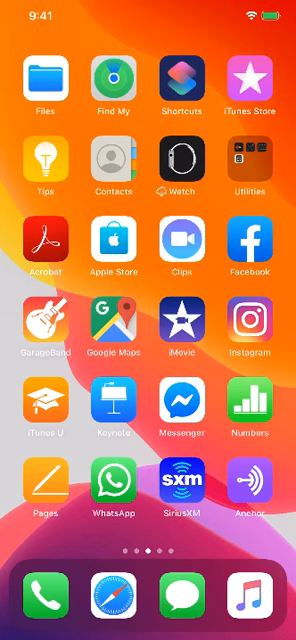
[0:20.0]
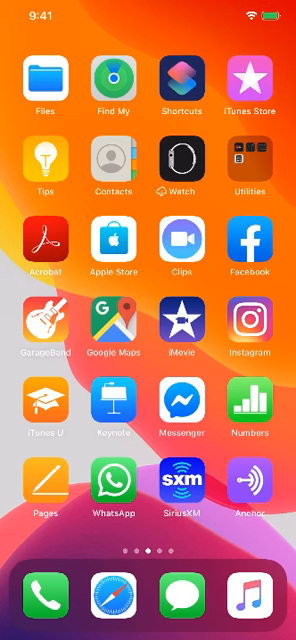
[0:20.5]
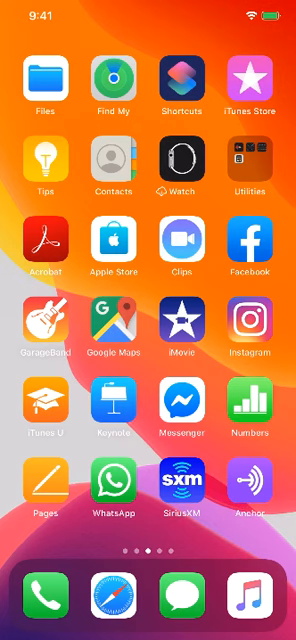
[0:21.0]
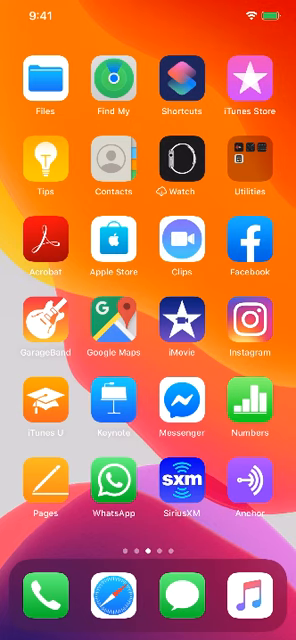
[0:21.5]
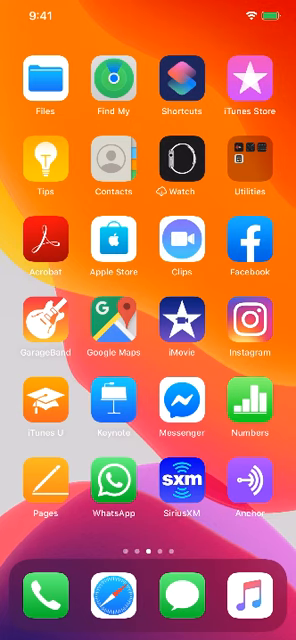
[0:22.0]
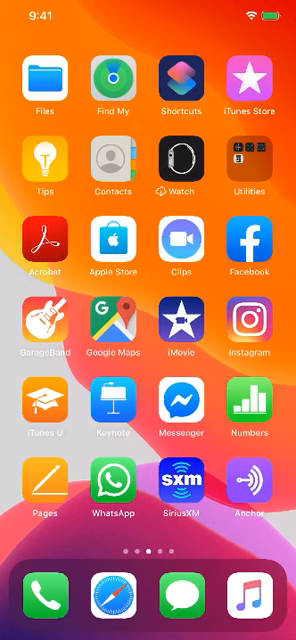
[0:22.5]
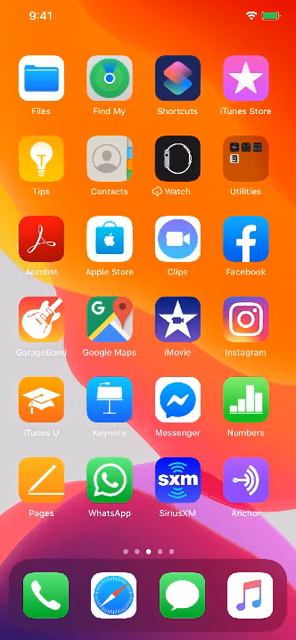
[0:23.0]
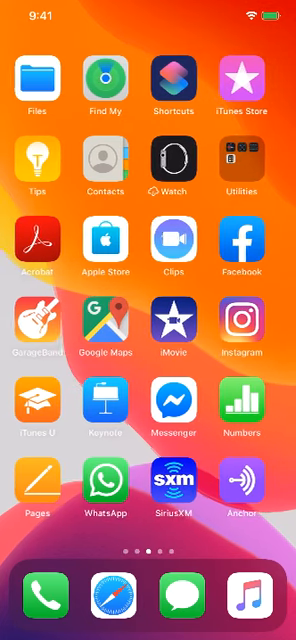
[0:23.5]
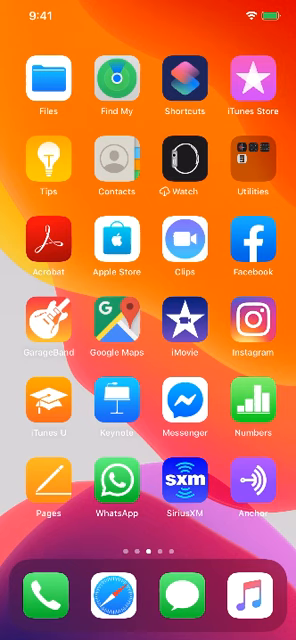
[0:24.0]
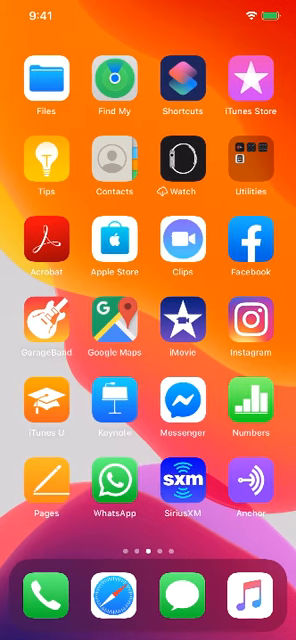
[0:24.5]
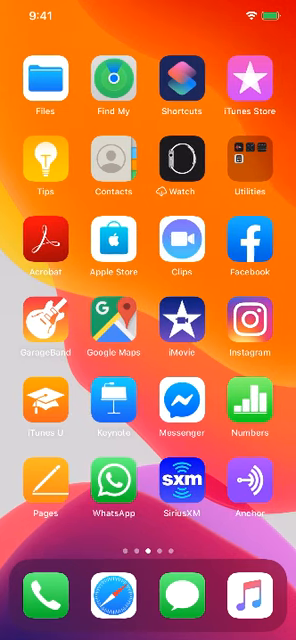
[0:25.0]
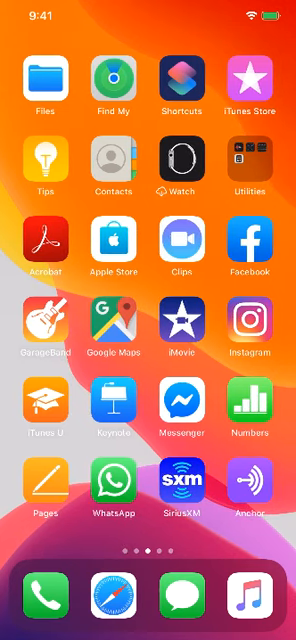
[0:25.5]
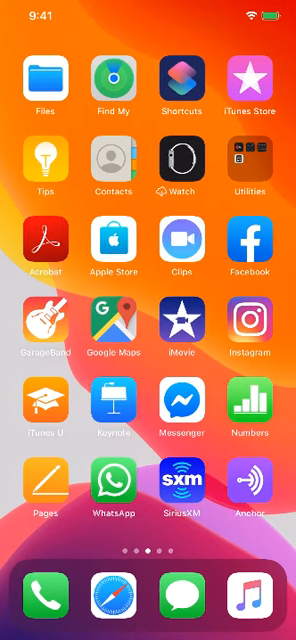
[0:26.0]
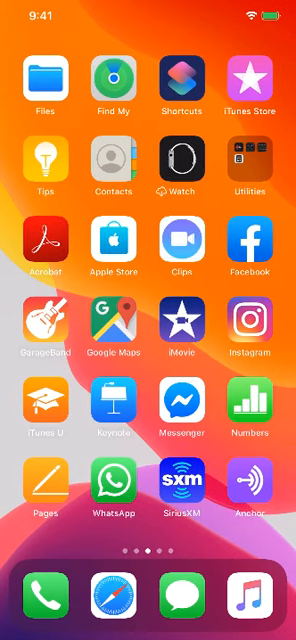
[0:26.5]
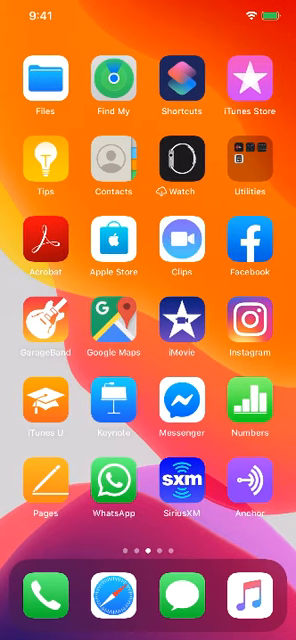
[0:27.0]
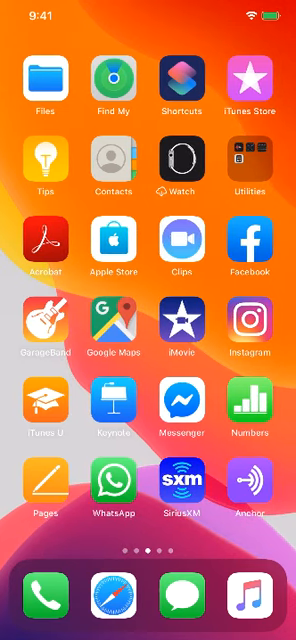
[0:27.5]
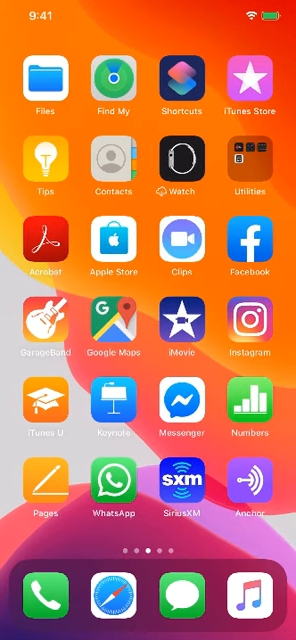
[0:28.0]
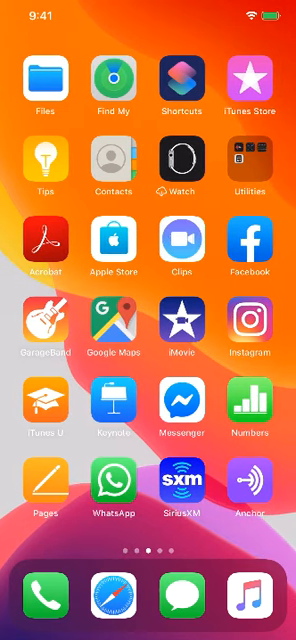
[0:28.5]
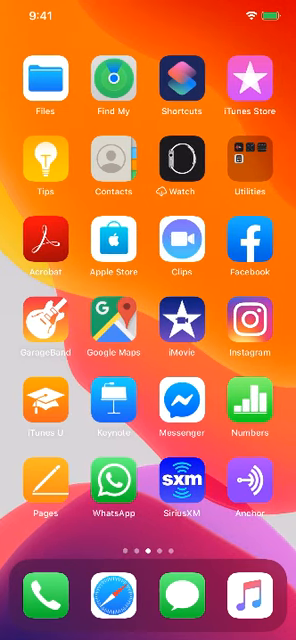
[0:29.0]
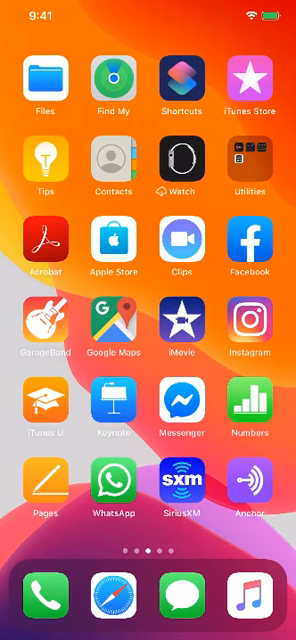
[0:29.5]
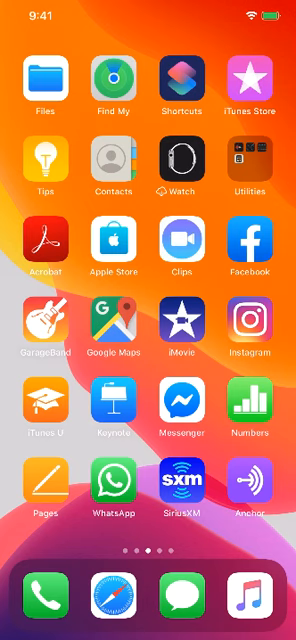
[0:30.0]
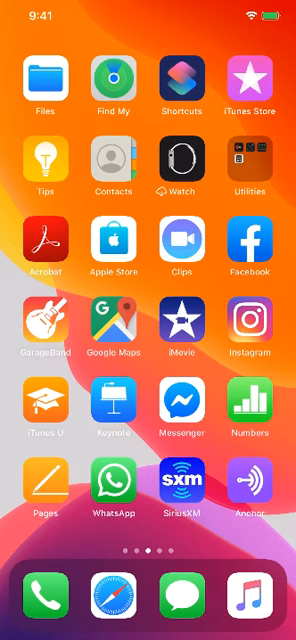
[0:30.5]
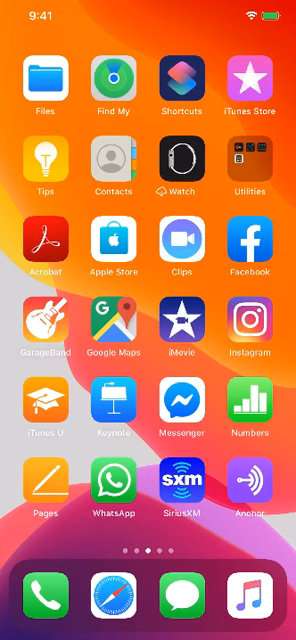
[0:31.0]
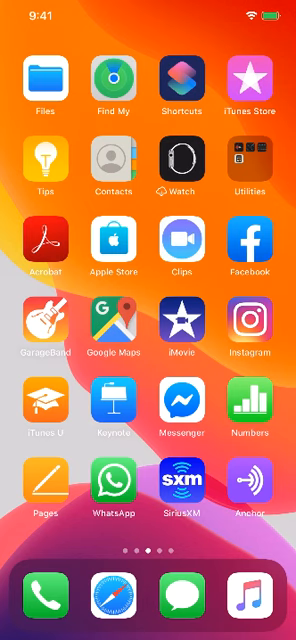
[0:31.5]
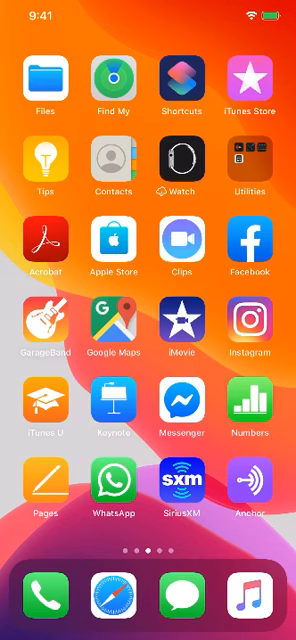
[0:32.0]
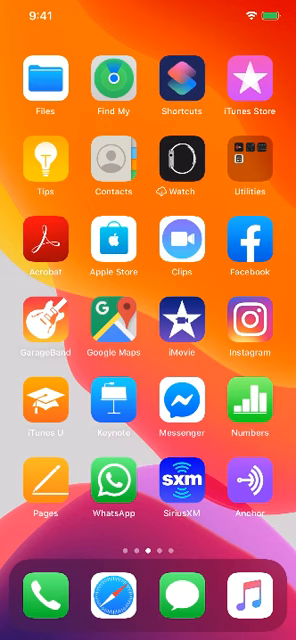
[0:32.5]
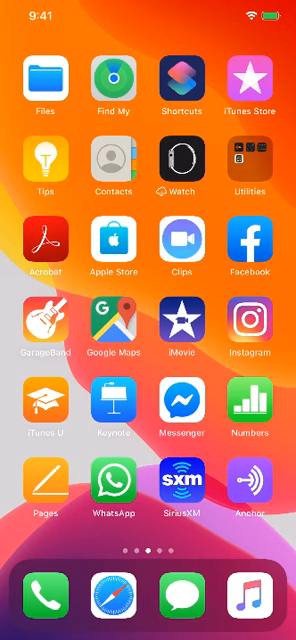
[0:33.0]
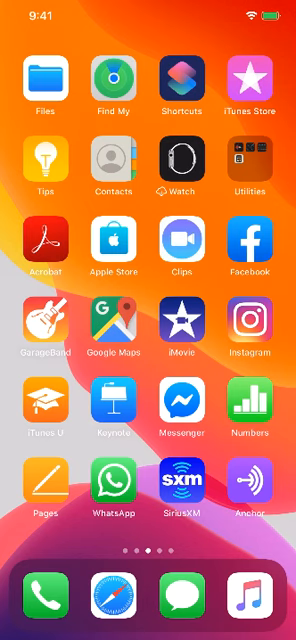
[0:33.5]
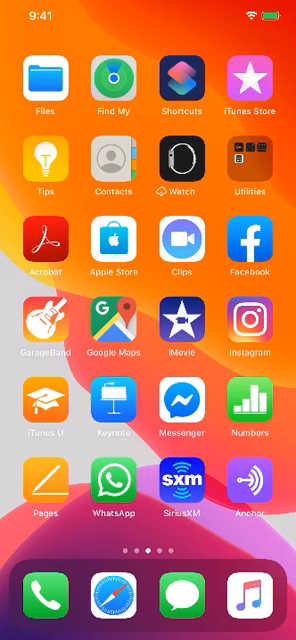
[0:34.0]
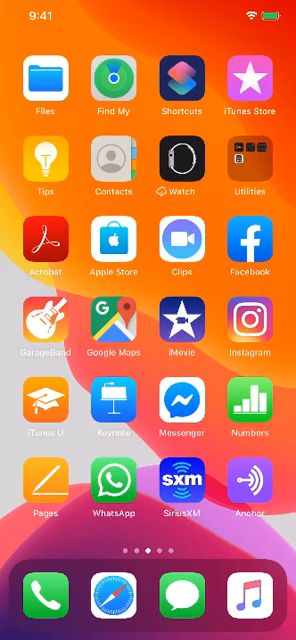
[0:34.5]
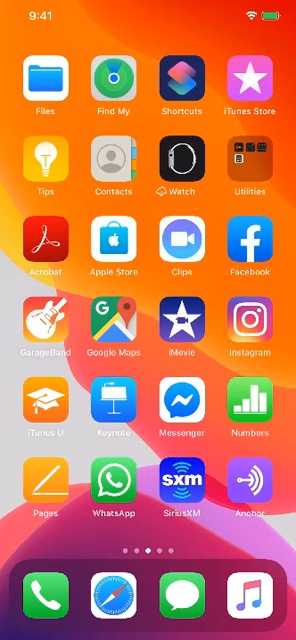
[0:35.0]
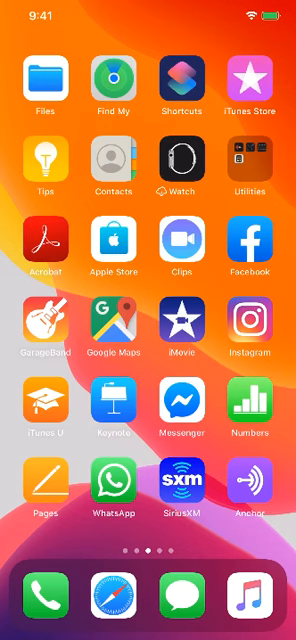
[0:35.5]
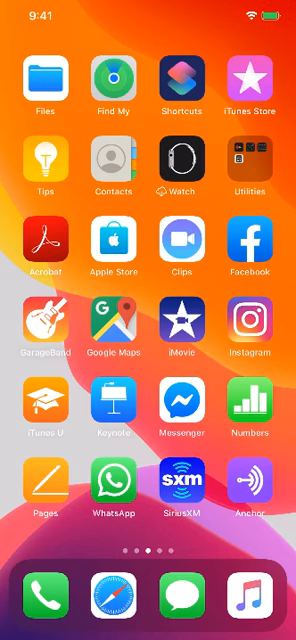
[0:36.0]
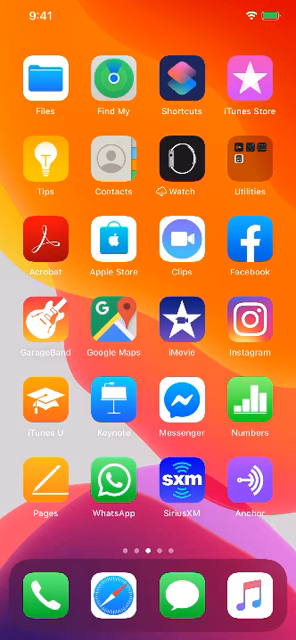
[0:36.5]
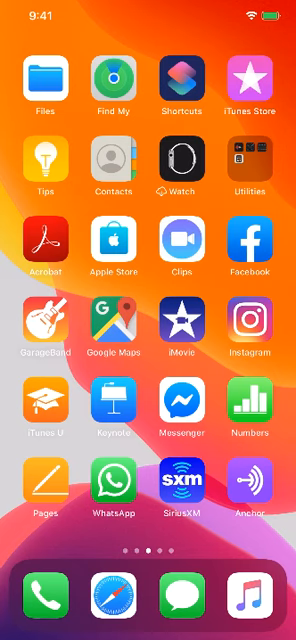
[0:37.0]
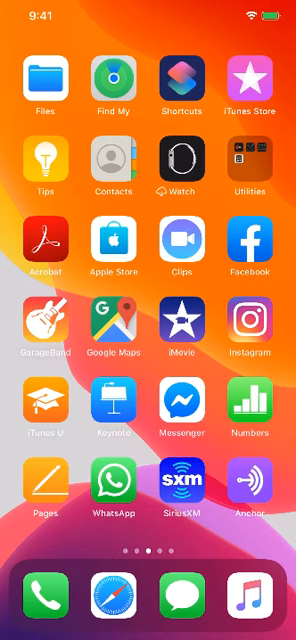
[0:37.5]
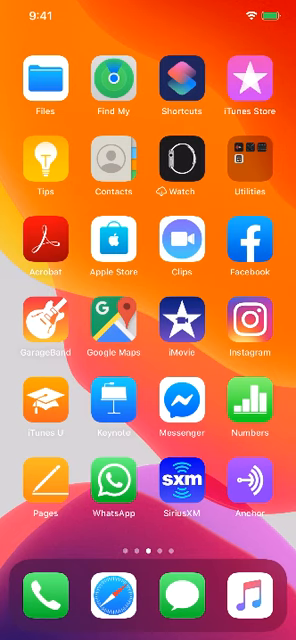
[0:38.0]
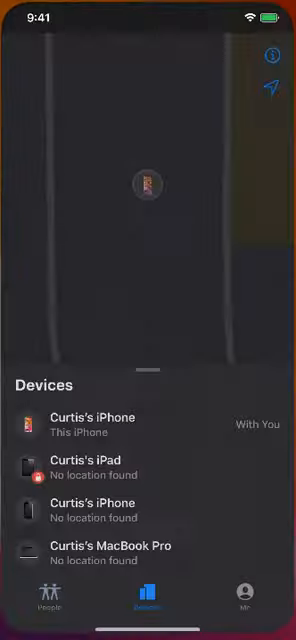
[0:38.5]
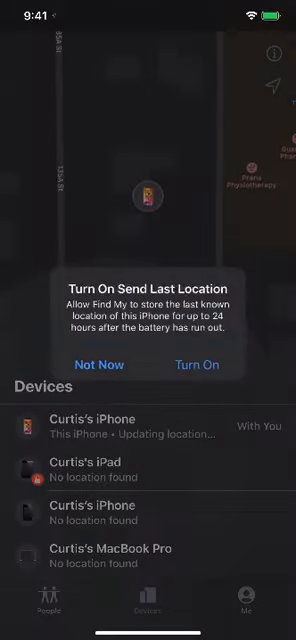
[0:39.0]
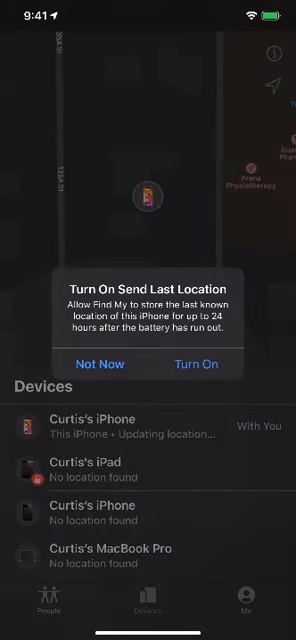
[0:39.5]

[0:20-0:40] A smartphone screen is being recorded, with an orange, yellow, gray and pink background and multiple rows and columns of applications. The top left shows the time as 9:41, and the top right shows a battery icon as a full green bar next to a Wi-Fi signal at a full five bars. The user semi-swipes toward the right, almost making the current page of apps disappear off screen, but then lets go, and the screen stays on this page for some time. The user then interacts with one of the apps, and a pop-up box opens that reads "turn on send last location. Allow find my to store the last known location of this iPhone for up to 24 hours after the battery has run out." The pop-up has two buttons reading "not now" and "turn on".